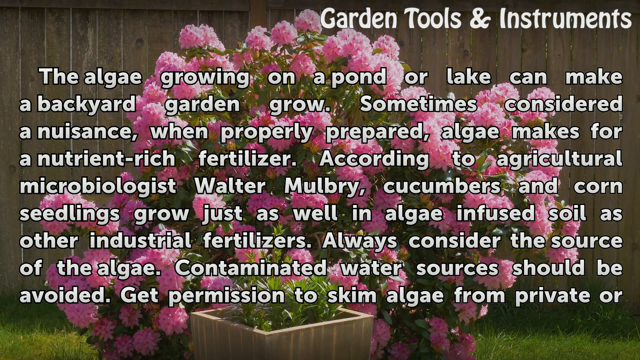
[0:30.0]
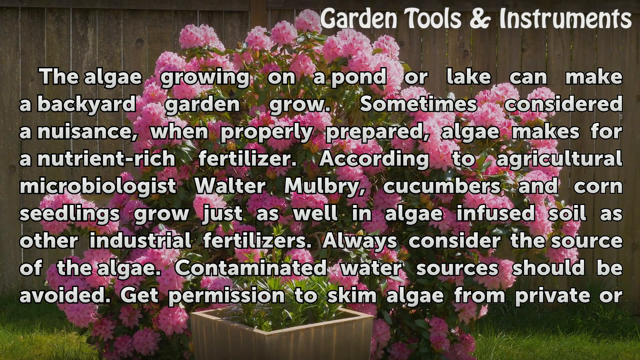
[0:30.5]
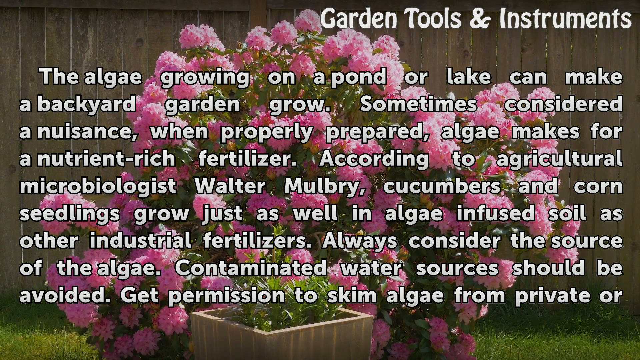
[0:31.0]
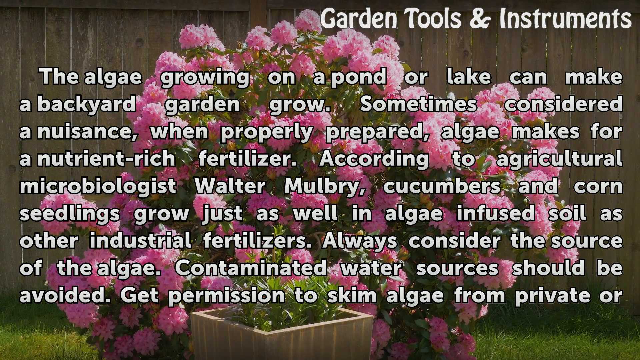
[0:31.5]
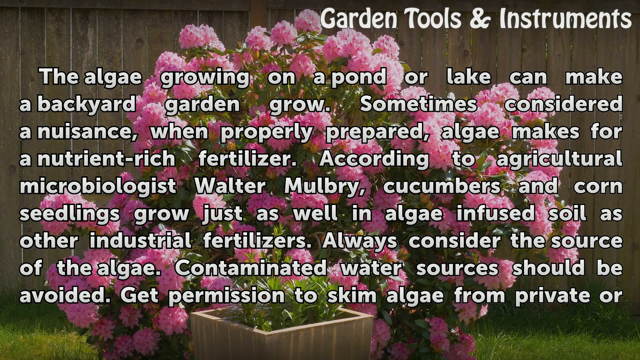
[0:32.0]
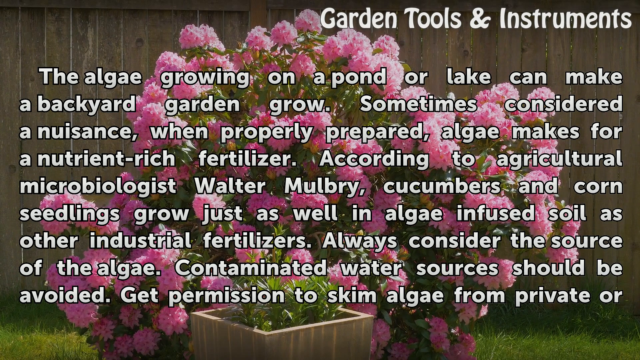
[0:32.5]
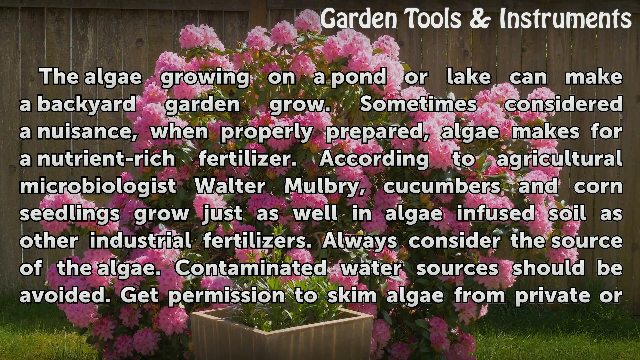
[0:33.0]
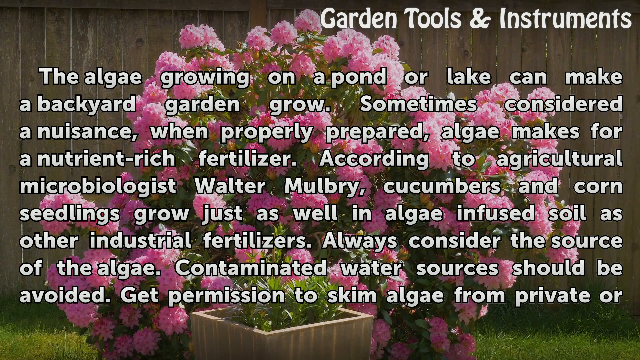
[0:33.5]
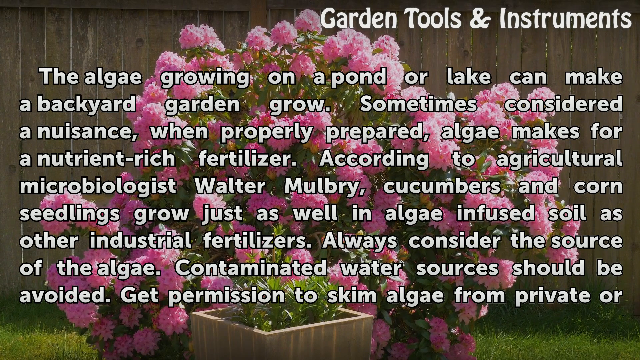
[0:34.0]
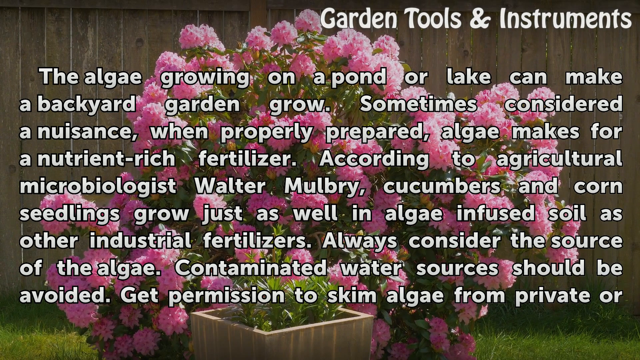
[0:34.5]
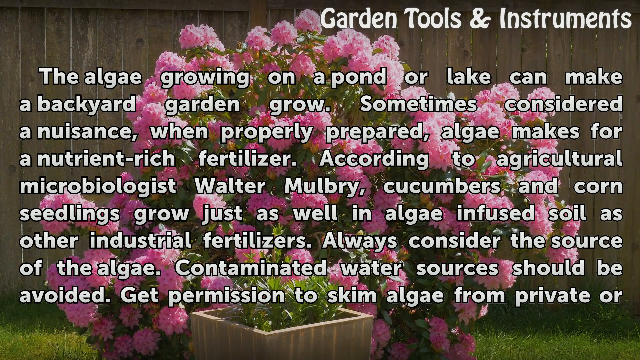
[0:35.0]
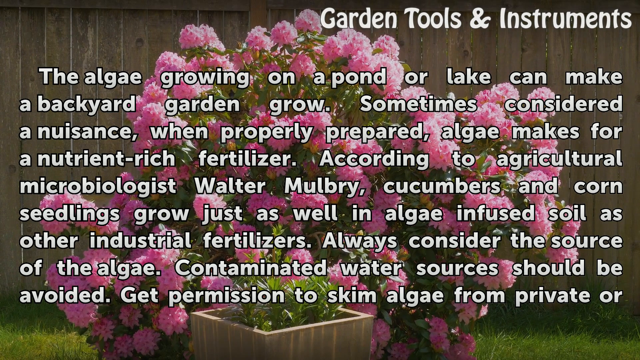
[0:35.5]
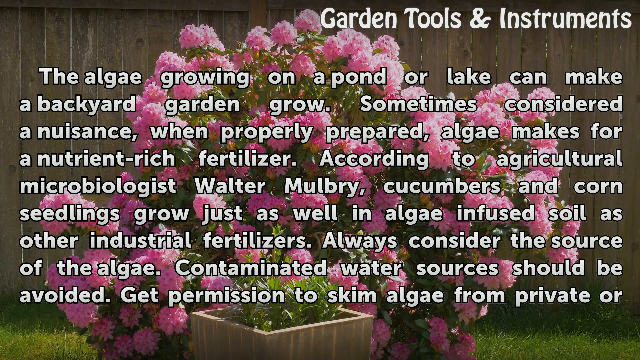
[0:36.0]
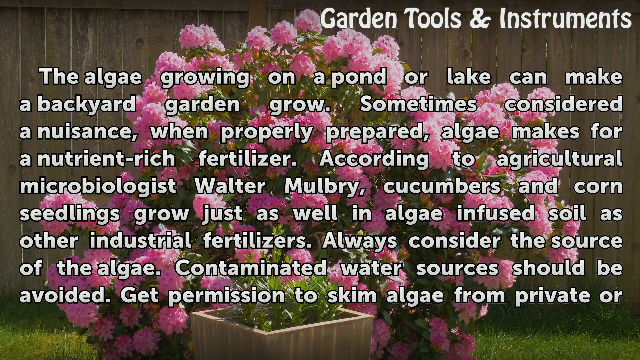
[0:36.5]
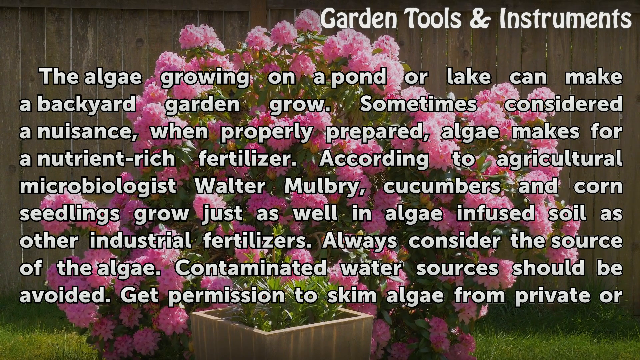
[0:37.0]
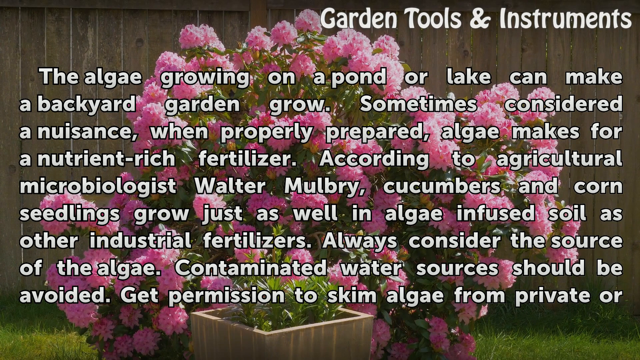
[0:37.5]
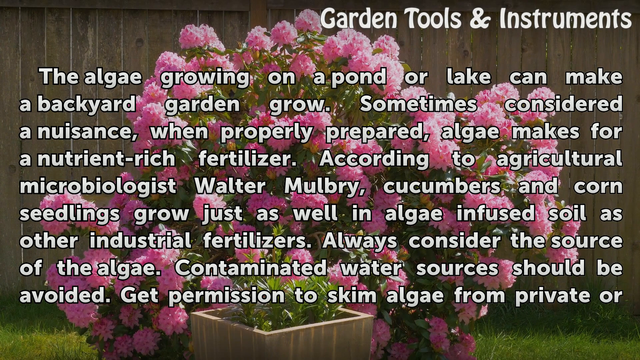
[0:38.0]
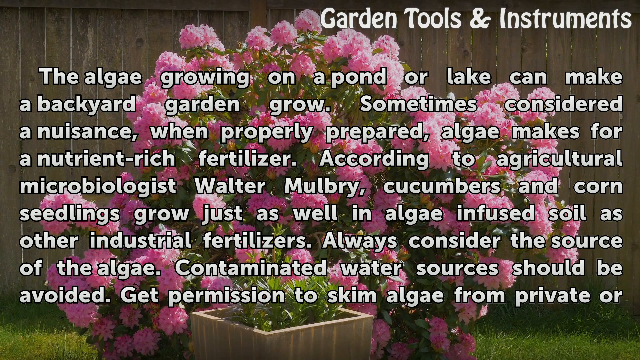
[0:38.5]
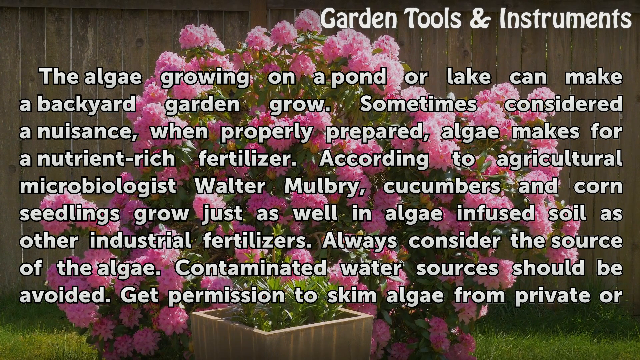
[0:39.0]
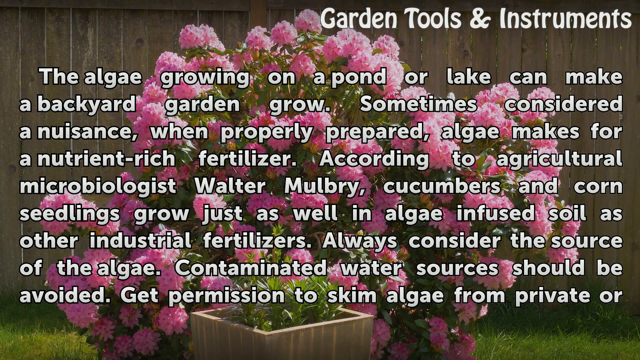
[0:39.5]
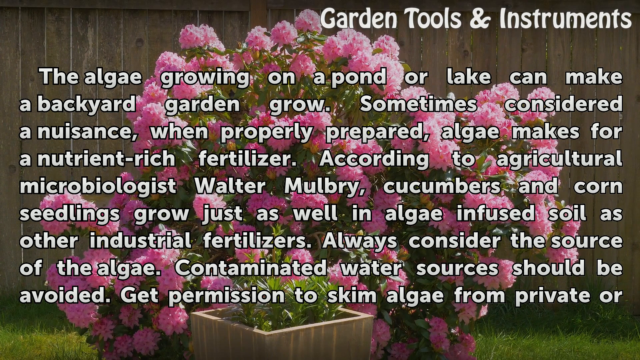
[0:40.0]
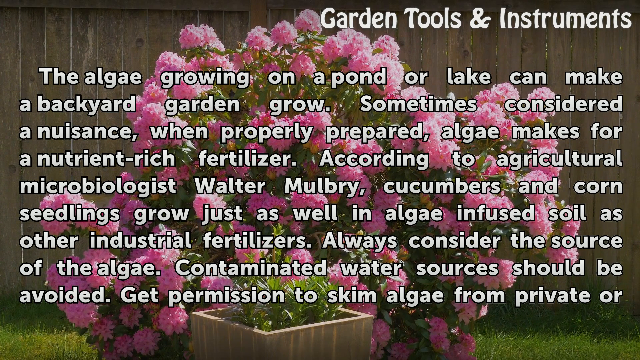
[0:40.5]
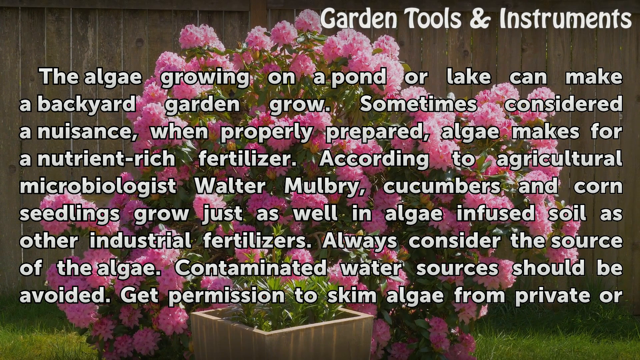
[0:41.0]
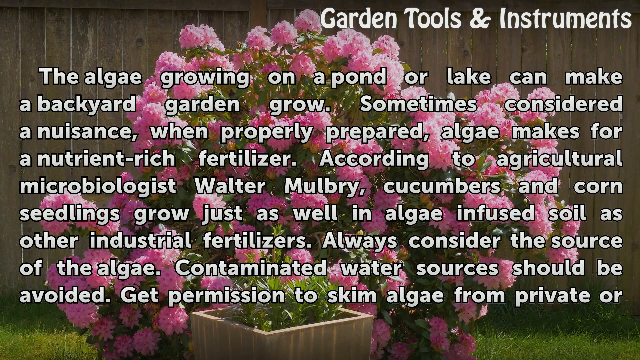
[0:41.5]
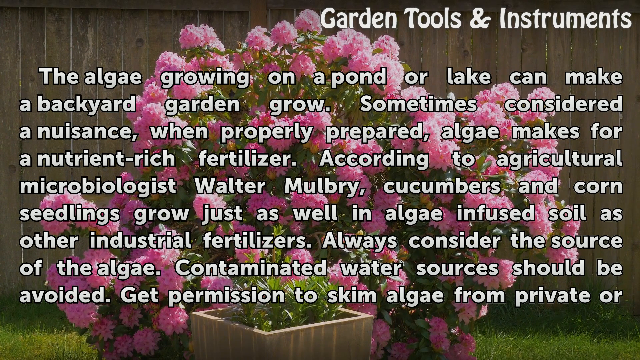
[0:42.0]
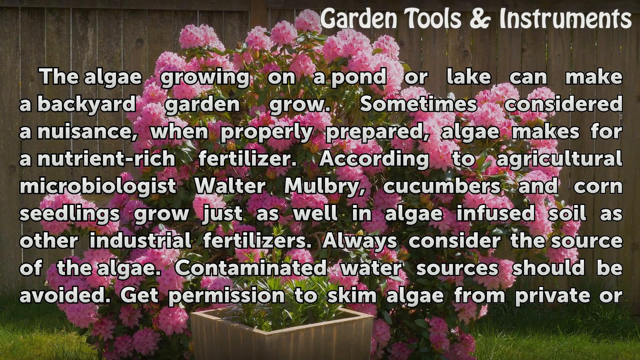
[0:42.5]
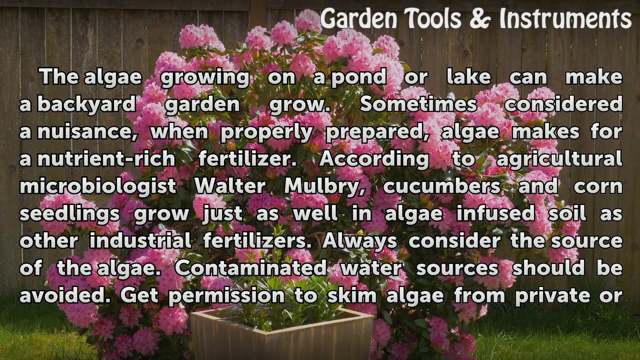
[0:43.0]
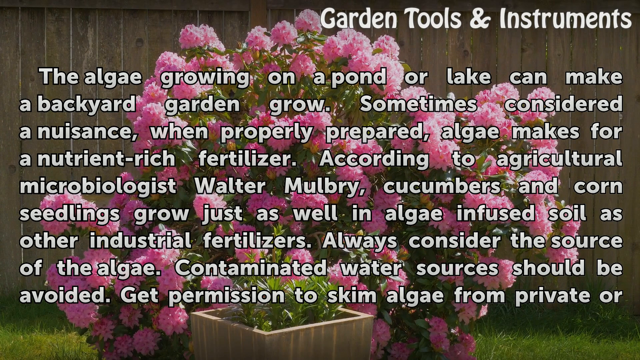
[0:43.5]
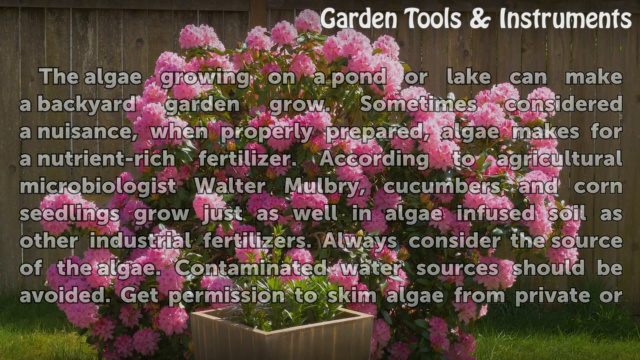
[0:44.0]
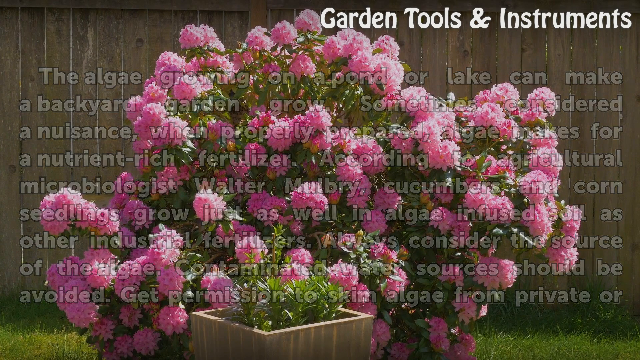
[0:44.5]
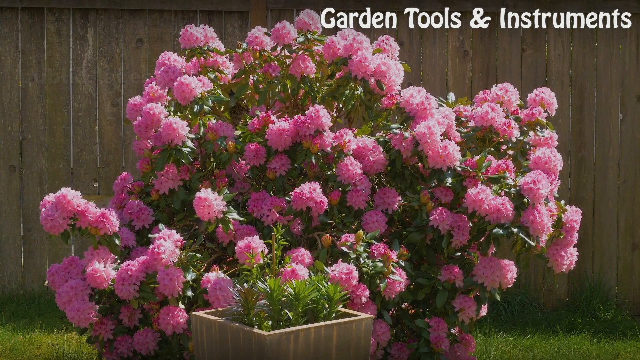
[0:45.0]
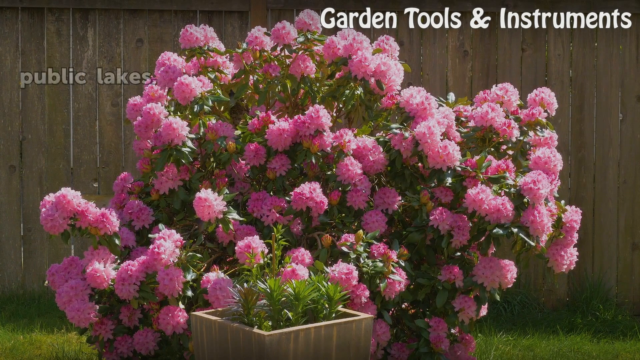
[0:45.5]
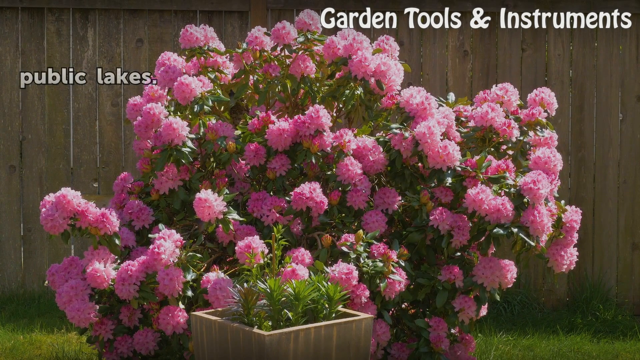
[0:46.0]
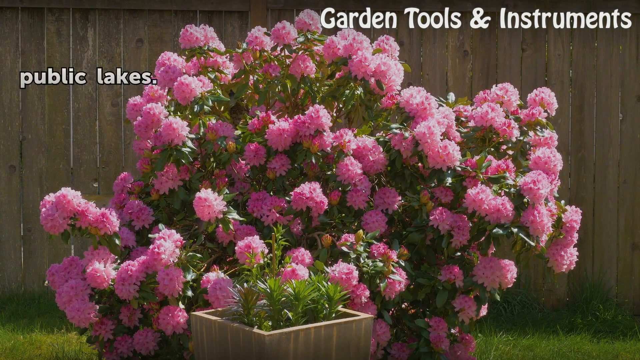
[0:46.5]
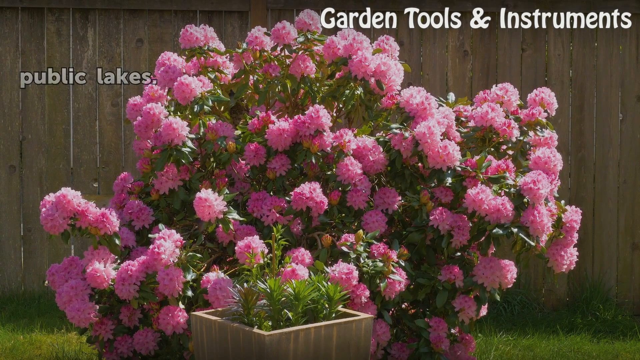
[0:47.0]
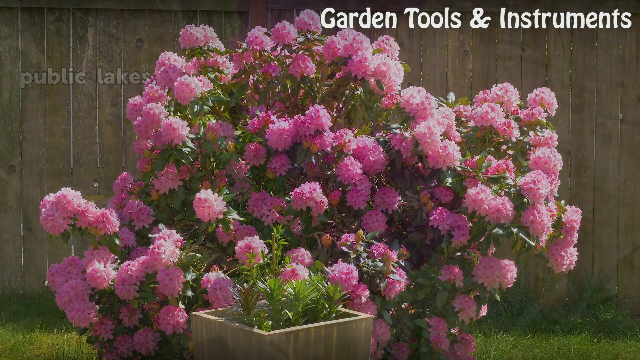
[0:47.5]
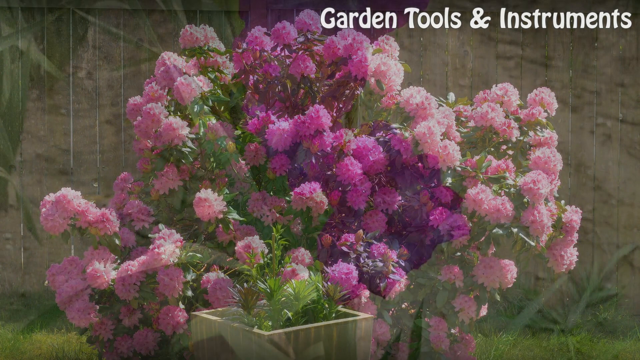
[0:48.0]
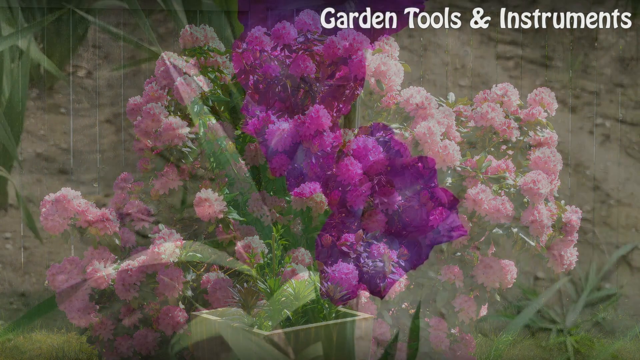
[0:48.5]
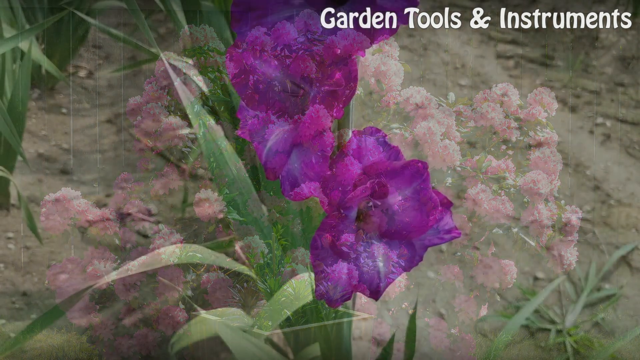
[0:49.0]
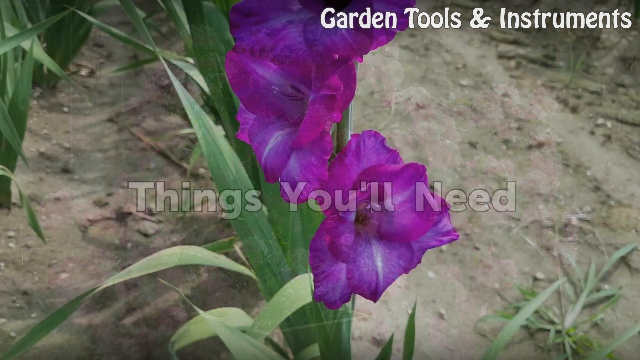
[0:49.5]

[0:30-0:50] The scene is a still, picture-postcard style image rather than moving video, with words written on it in white font. The words are set against a giant pink hydrangea bush, which sits in front of a brown wooden barn-type building, probably somewhere in the country. The text reads "the algae growing on a pond or lake can make a backyard garden grow. Sometimes consider a nuisance. Properly prepared algae makes for nutrient-rich fertilizer." It also says "contaminated water sources should be avoided" and notes that in some places permission is needed. The image is apparently taken from Garden Tools and Instruments.